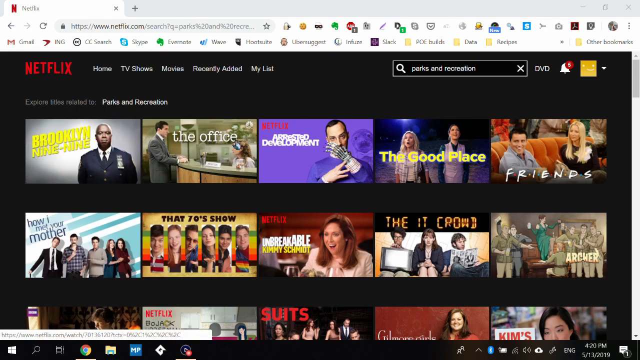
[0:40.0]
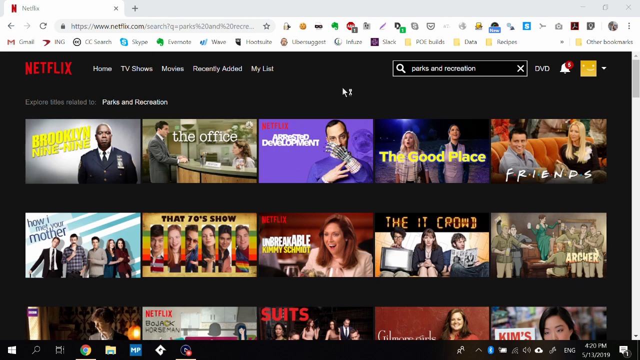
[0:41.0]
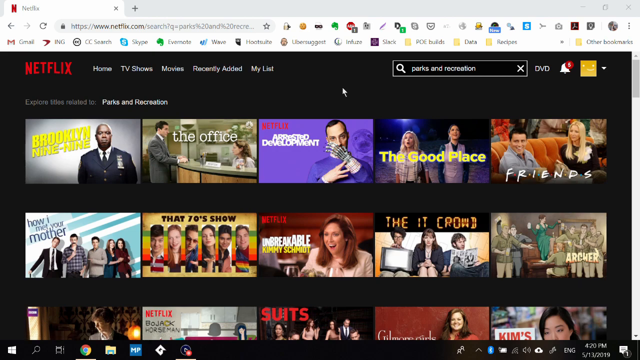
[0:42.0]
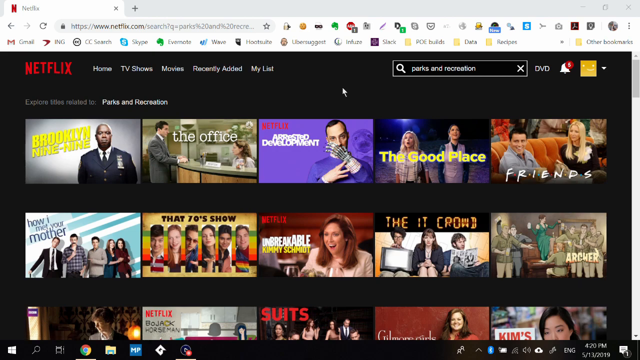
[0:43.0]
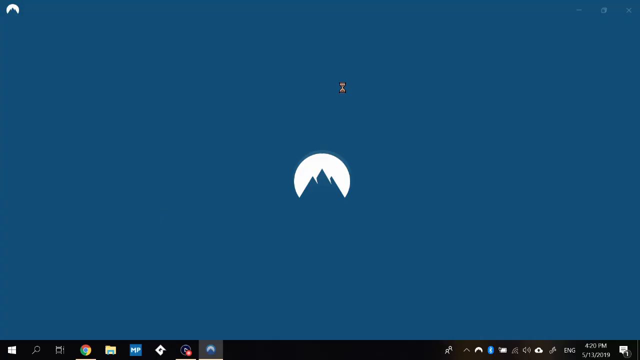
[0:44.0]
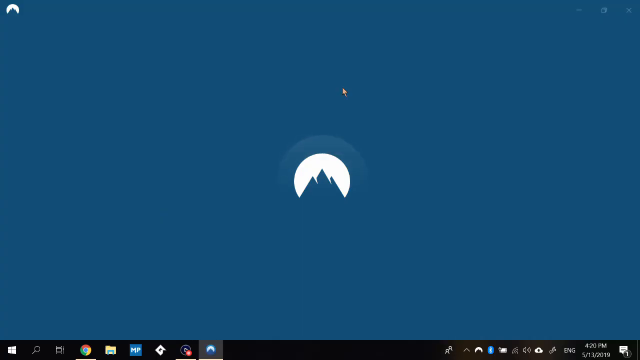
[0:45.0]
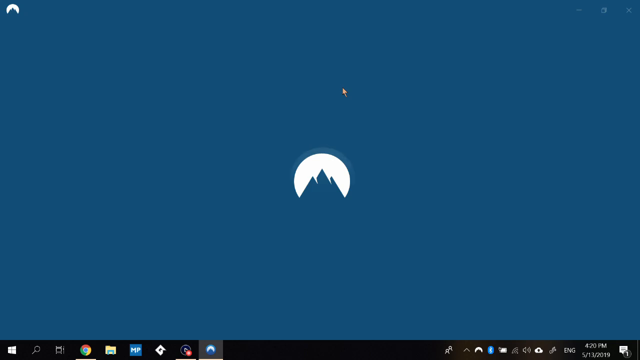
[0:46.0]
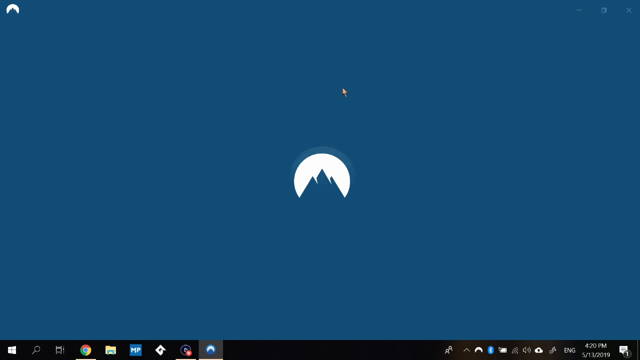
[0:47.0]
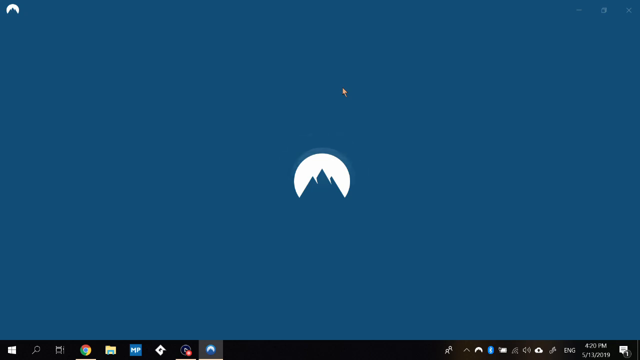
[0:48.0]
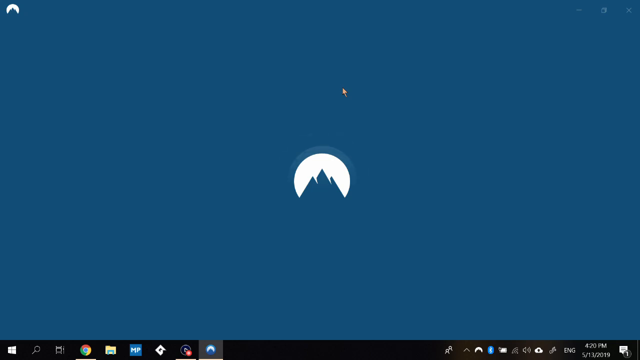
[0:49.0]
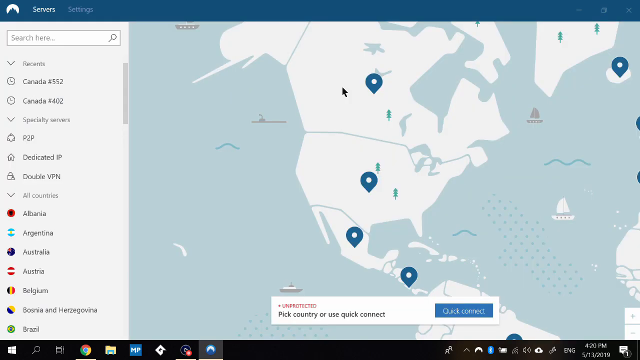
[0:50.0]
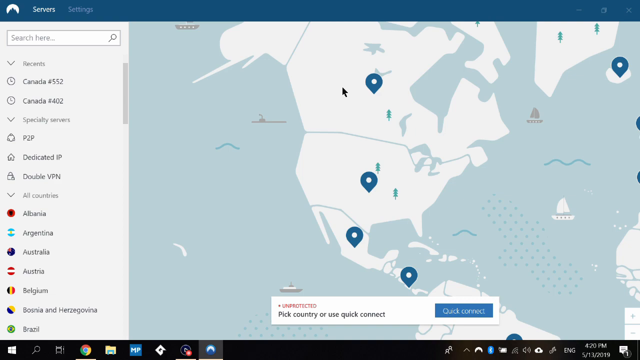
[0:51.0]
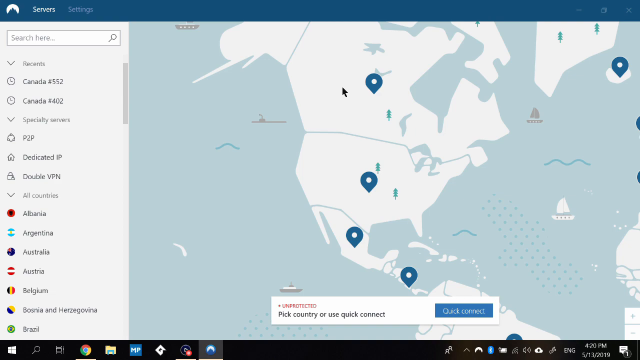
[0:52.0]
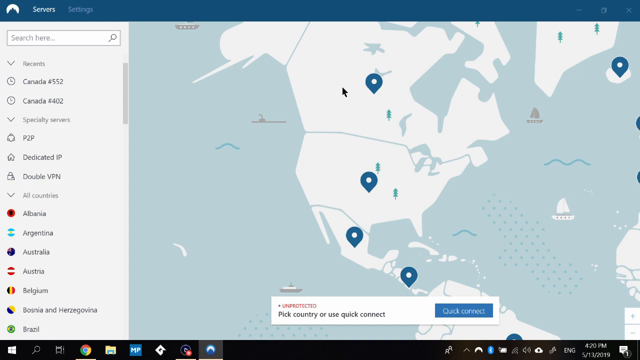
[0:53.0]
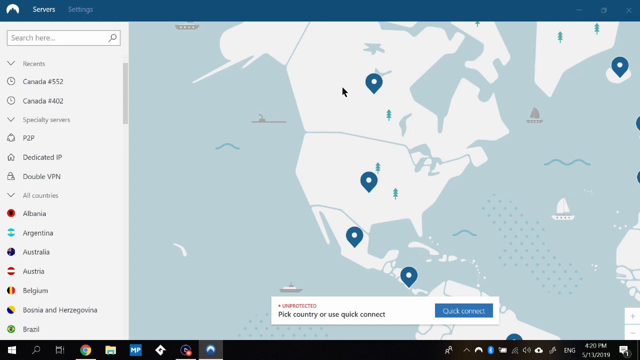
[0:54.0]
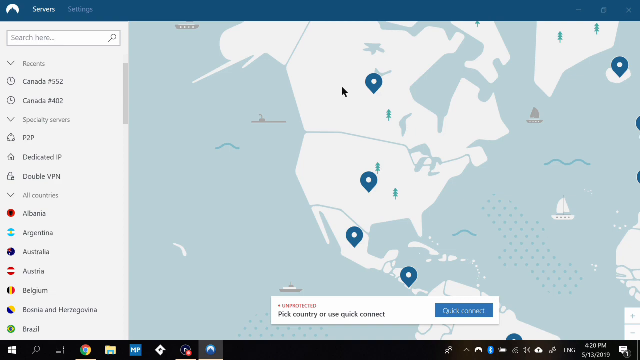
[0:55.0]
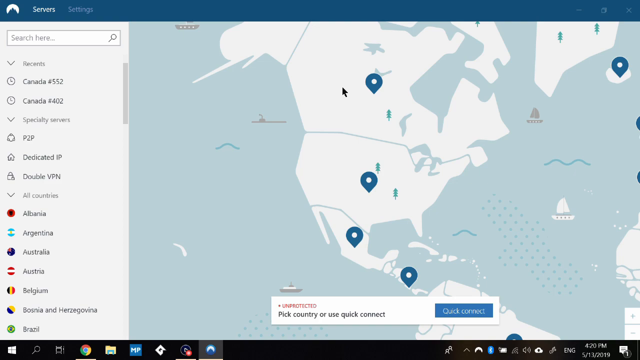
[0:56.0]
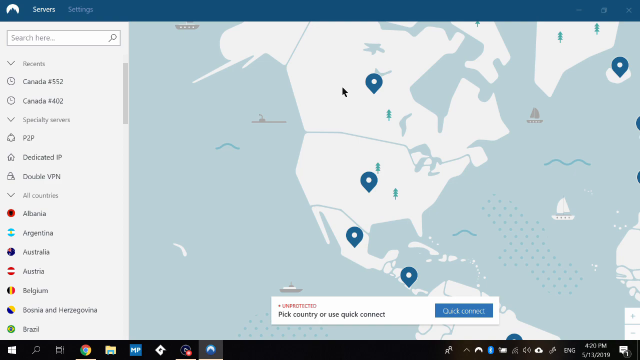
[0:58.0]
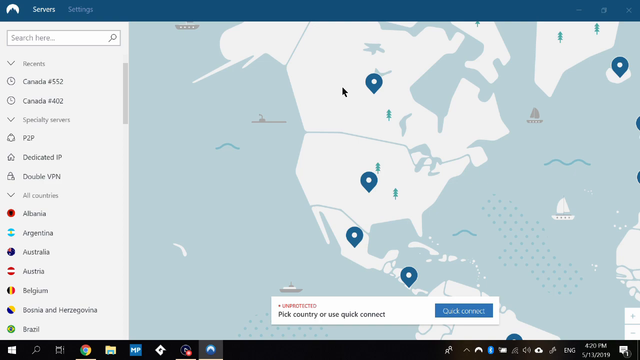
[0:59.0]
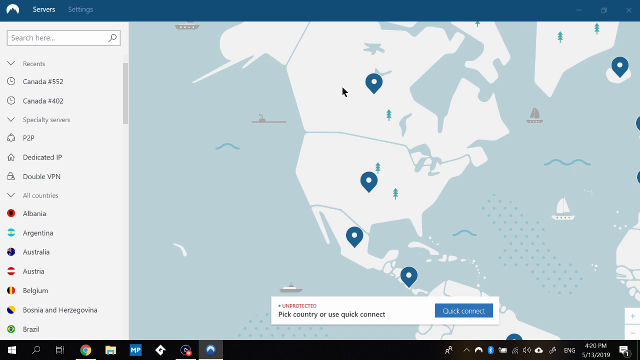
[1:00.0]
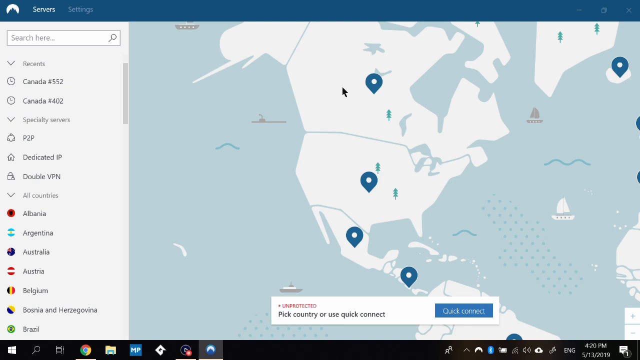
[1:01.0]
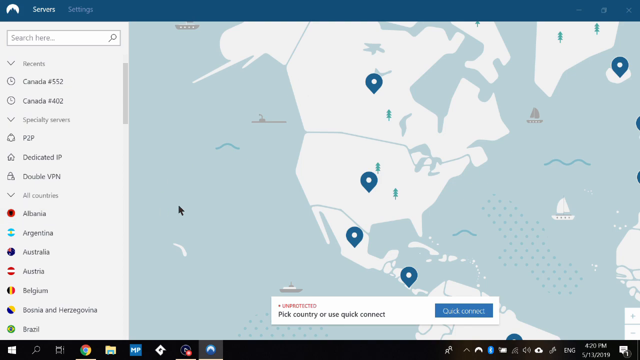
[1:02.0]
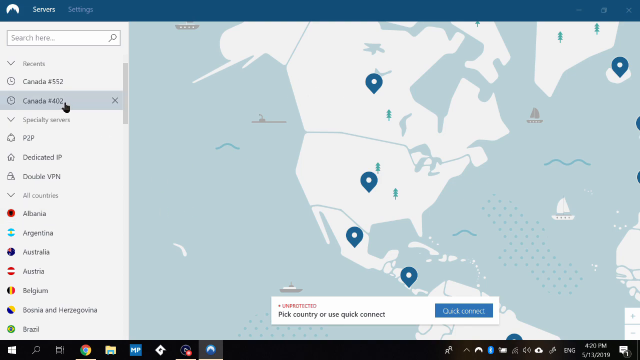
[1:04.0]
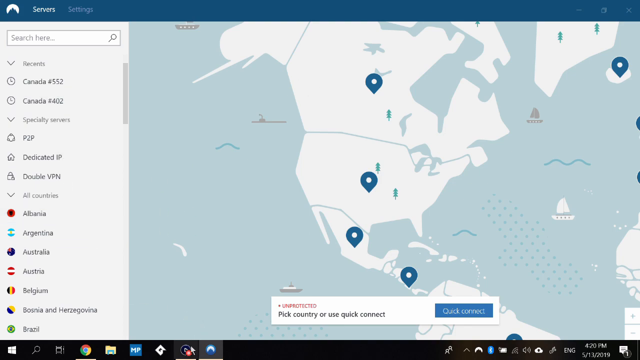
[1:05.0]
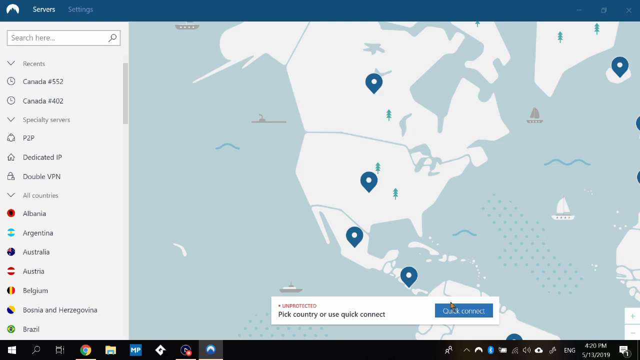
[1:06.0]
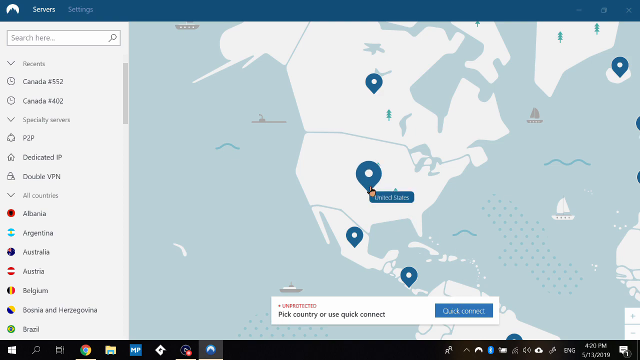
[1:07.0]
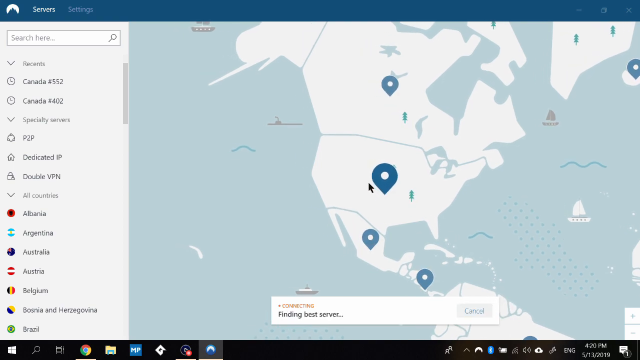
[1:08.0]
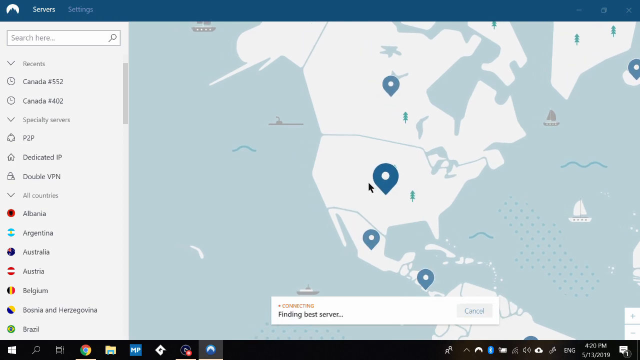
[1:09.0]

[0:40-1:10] The screen shows a list of servers with many locations, including Canada, P2P, Australia and many other countries. The mouse clicks on United States. Then what looks like a map appears, with a pinpoint marking a location. A settings option is on the screen, but the mouse clicks on servers, where there is a list of countries and a place to search for a country.